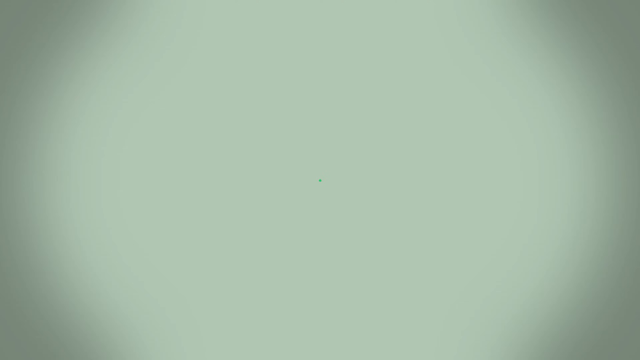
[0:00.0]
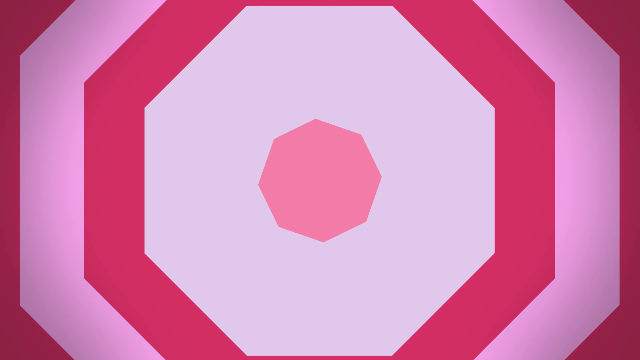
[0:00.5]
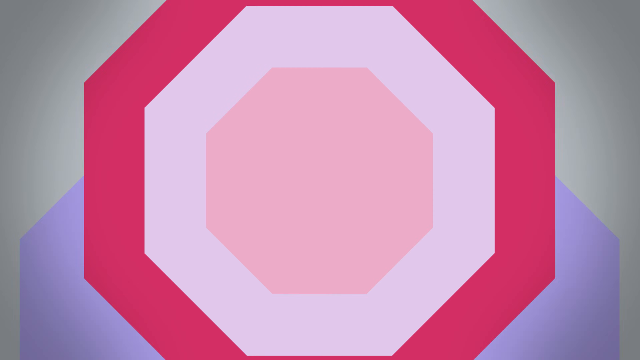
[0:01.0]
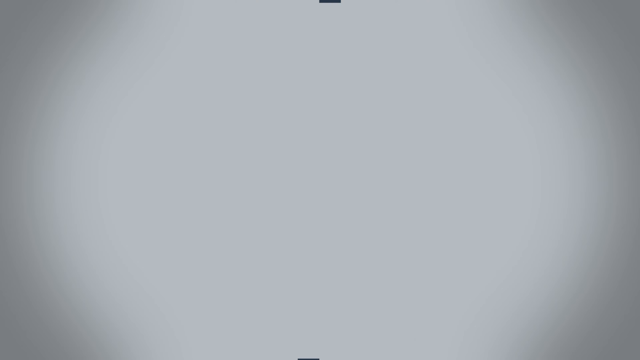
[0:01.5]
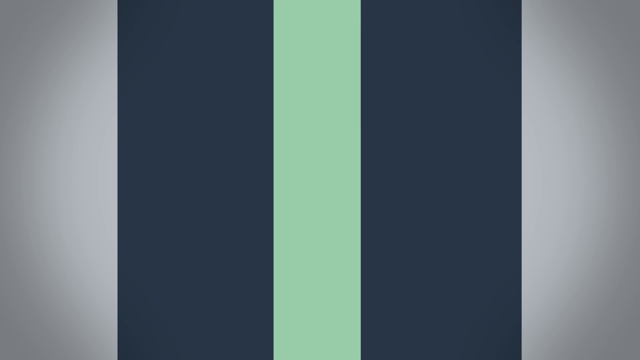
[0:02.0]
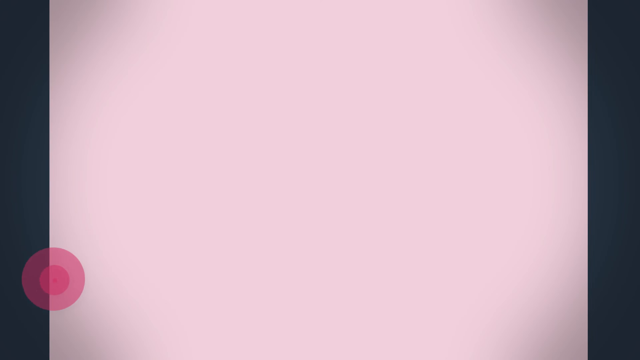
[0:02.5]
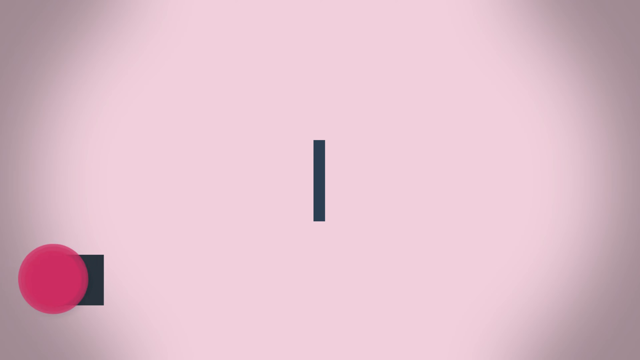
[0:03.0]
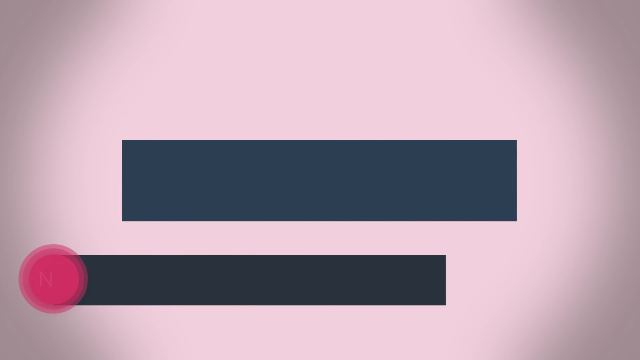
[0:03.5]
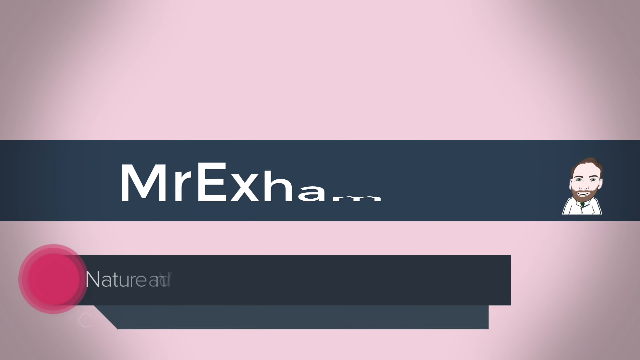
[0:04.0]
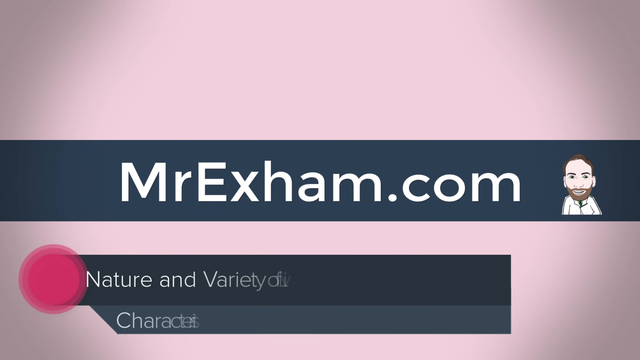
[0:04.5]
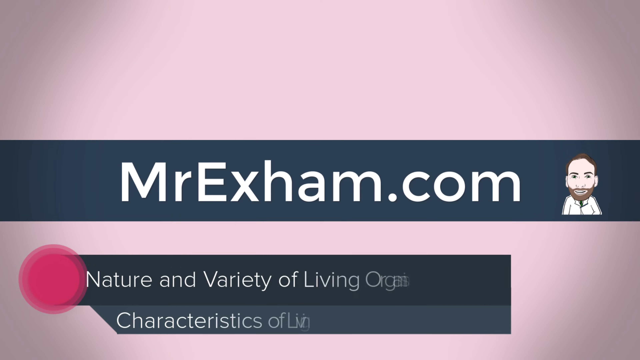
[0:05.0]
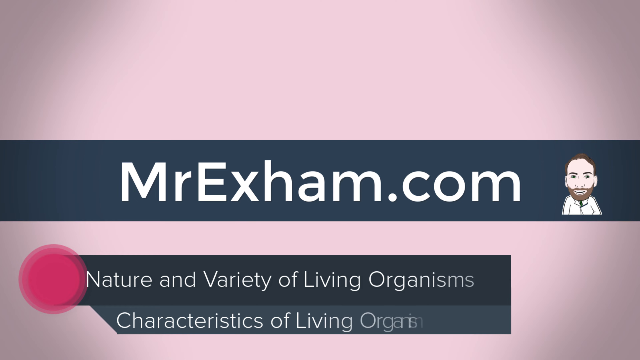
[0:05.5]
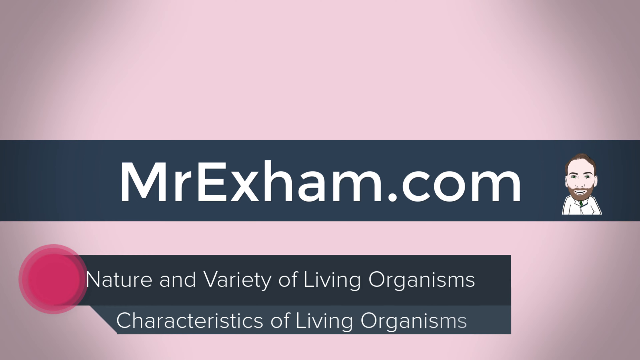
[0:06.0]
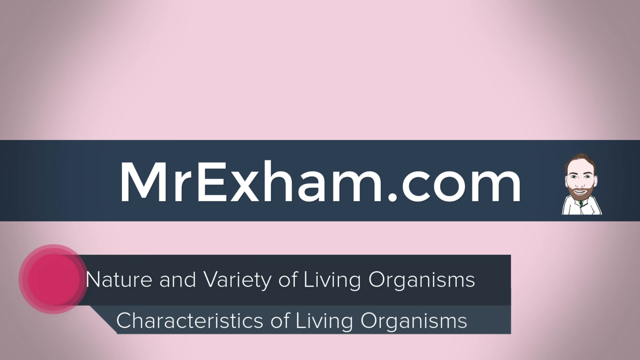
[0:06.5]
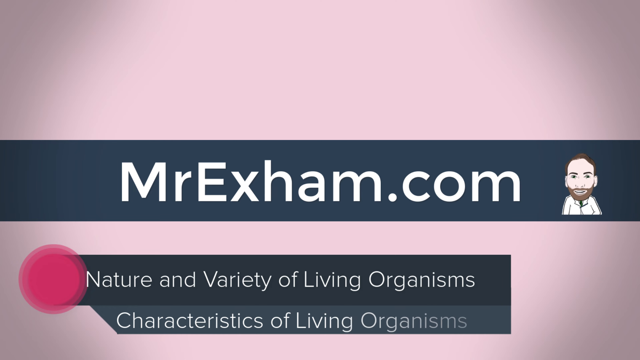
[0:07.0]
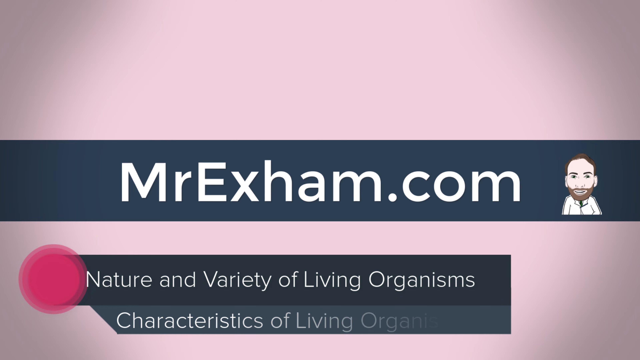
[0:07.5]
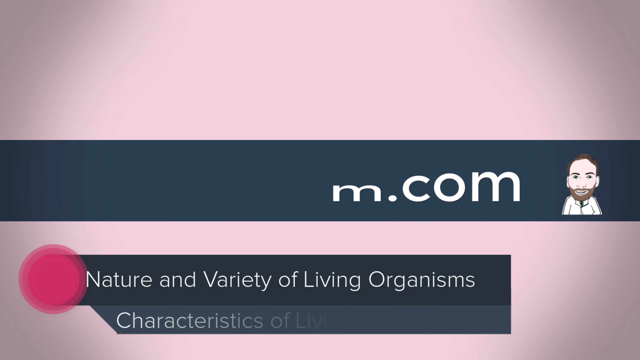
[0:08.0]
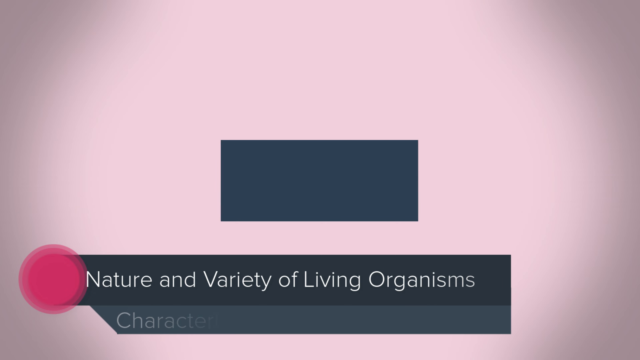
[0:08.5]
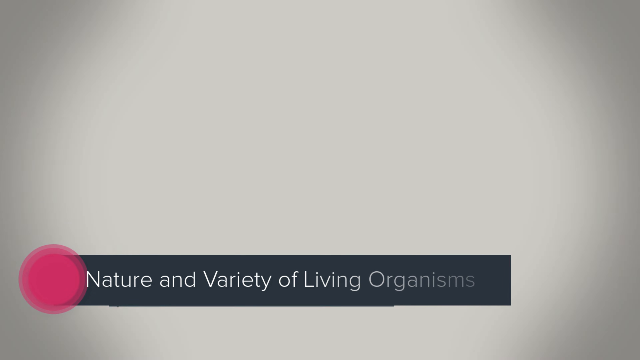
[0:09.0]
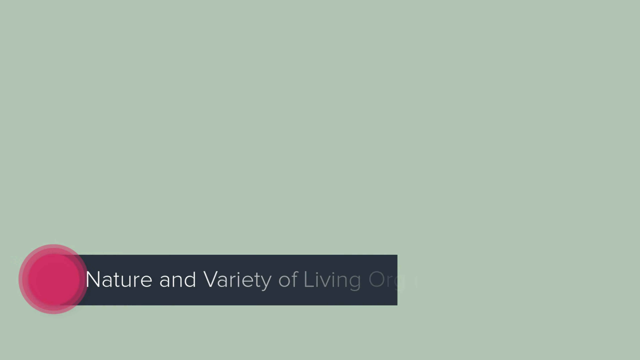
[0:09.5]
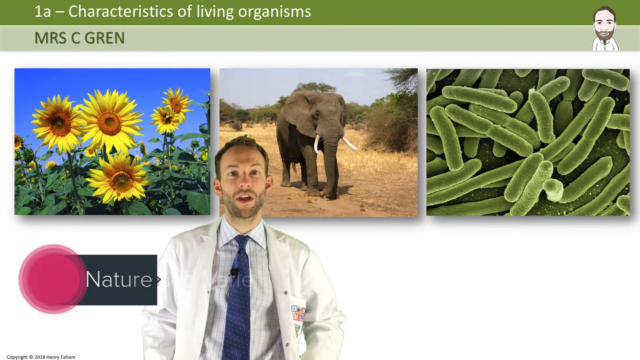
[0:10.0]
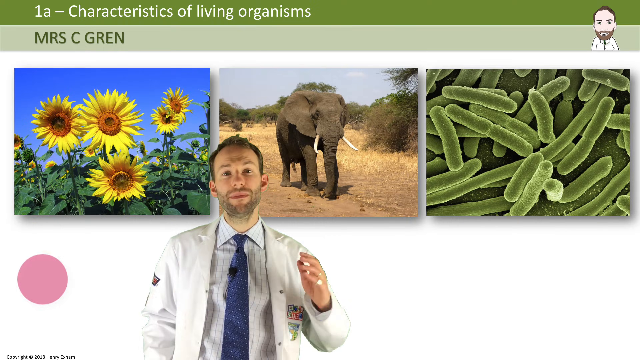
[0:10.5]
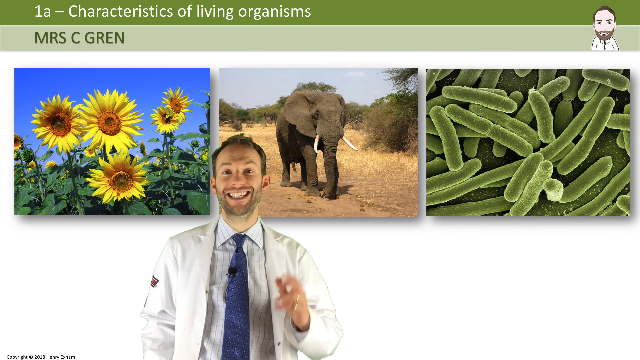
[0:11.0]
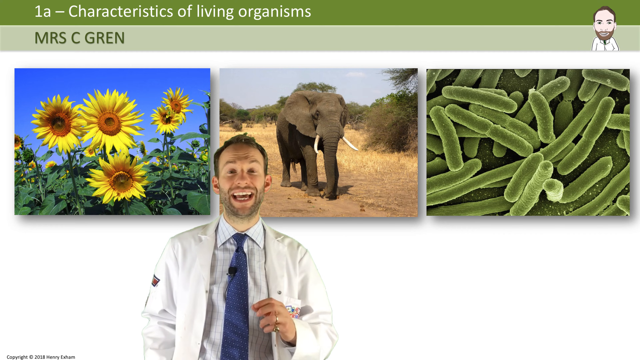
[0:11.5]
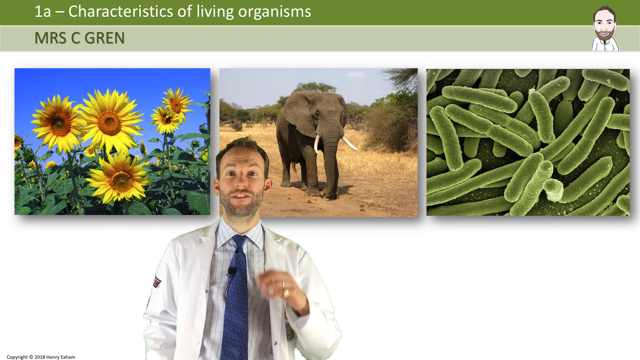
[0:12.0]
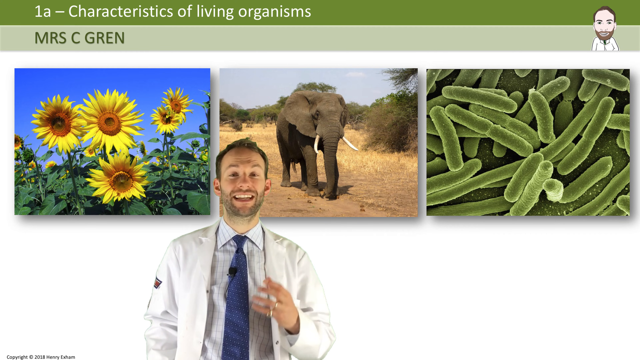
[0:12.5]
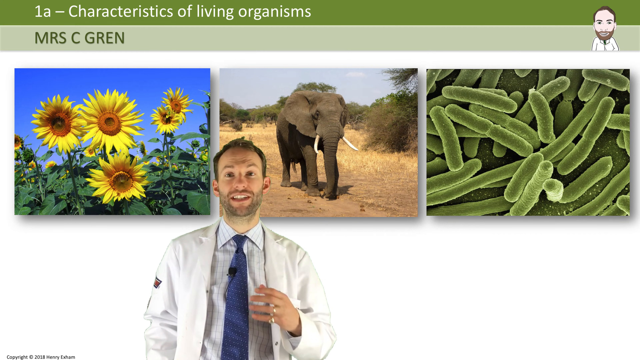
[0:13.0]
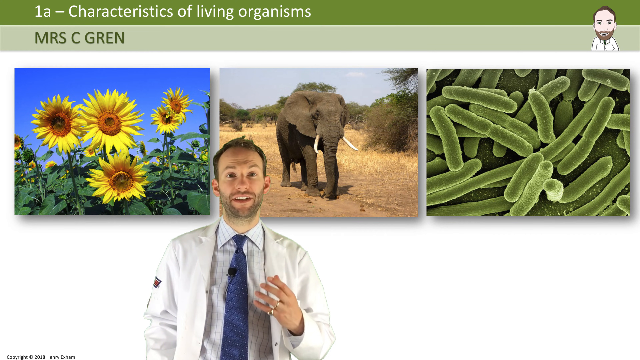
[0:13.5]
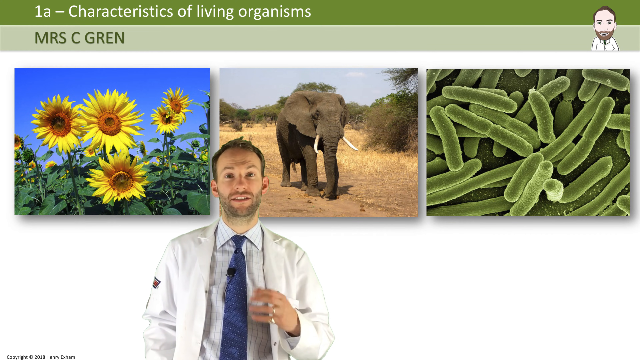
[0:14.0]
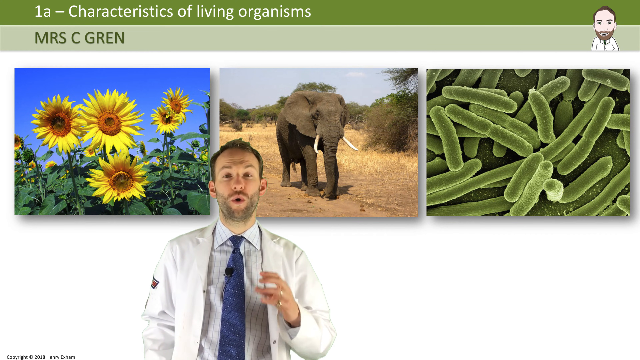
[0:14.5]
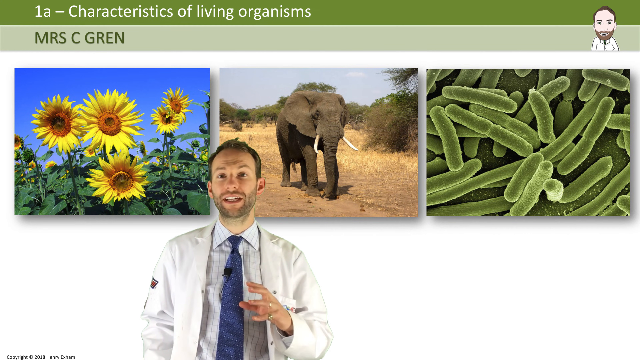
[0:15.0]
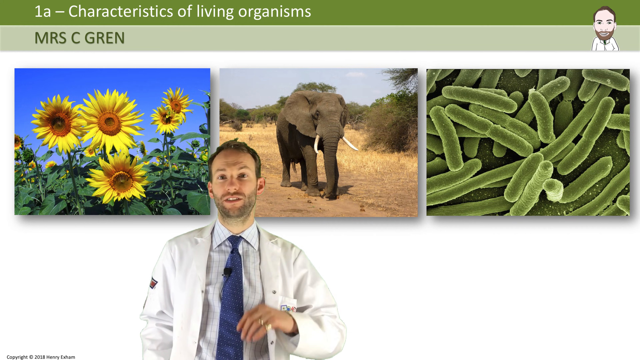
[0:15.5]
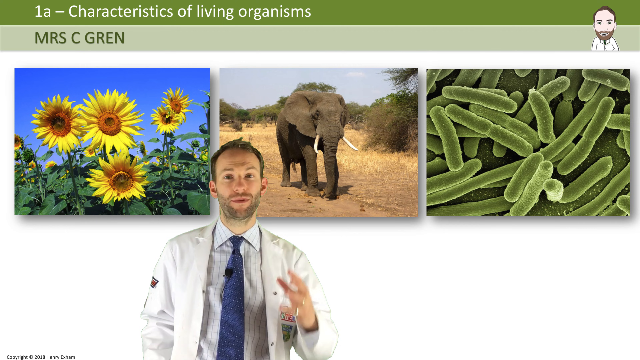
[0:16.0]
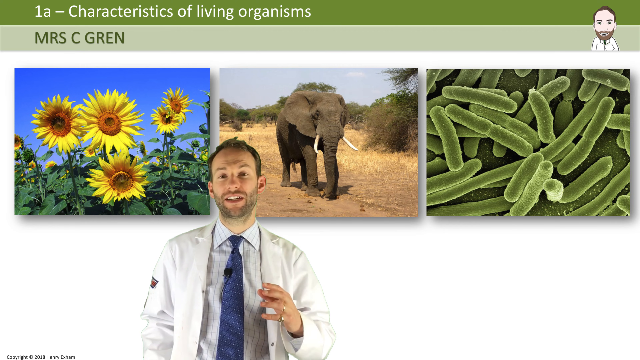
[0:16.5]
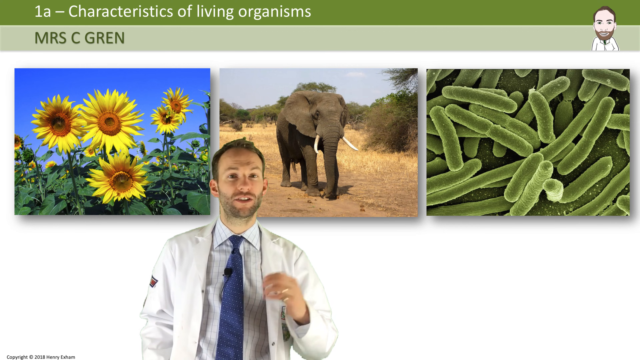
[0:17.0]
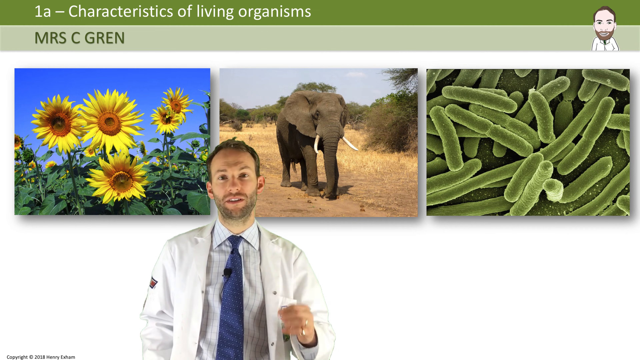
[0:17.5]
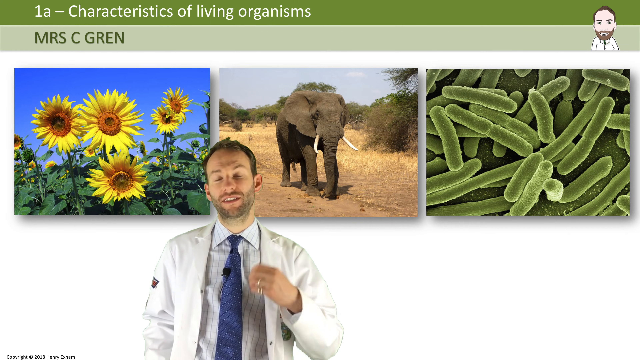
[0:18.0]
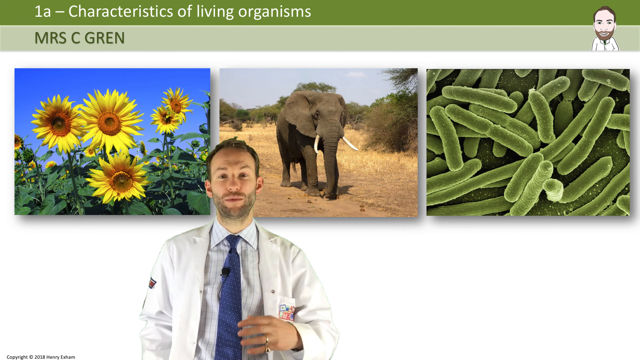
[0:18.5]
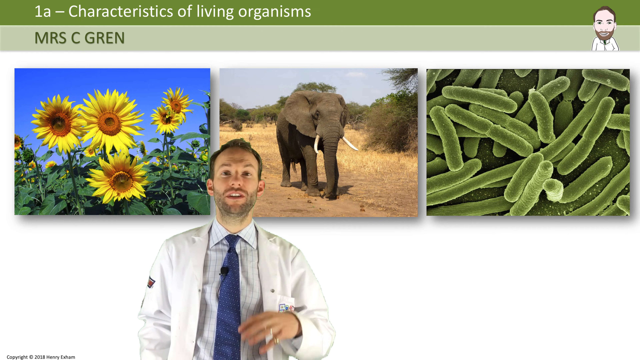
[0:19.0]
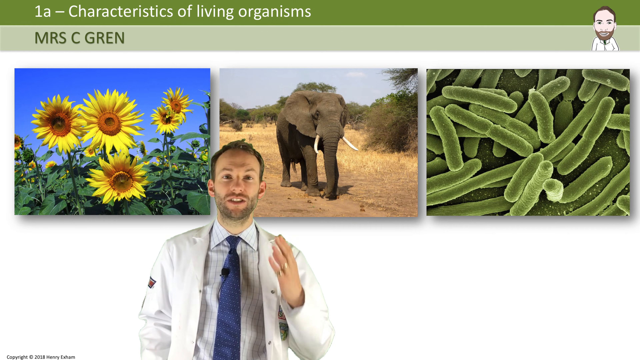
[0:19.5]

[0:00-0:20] A series of pink and light pink polygons appears in a pattern, then turns into an octagon before dropping to the bottom. The screen becomes gray and "MrExham.com" is shown with a cartoon of a scientist on the right. The message "Nature and Variety of Living Organisms" appears at the bottom of the screen, followed by "Characteristics of Living Organisms". The screen turns pink, and "MrExHam.com" is shown across the screen along with more text. The scene transitions to a Caucasian man in a lab coat standing at the bottom of the screen against a white background. Three images are shown: sunflowers on the left, an elephant in the middle, and what seems to be bacteria at the end. The man speaks, moving his head and hands in a quite animated way.